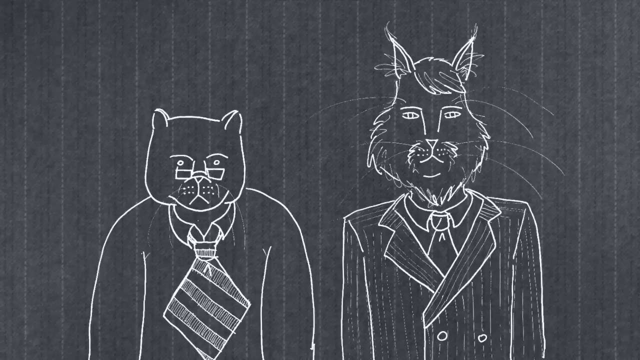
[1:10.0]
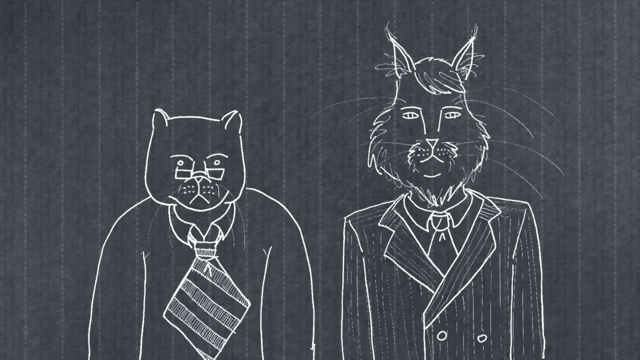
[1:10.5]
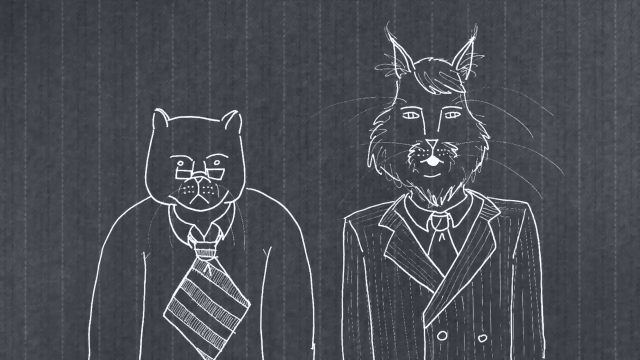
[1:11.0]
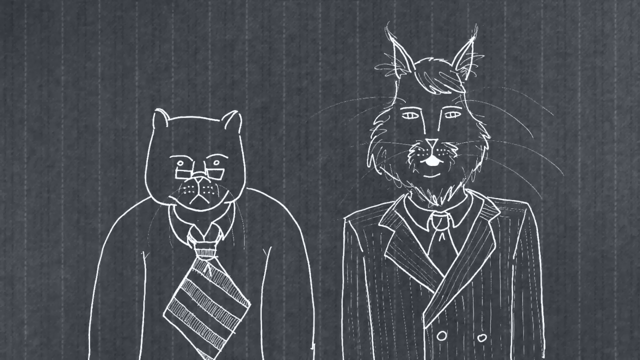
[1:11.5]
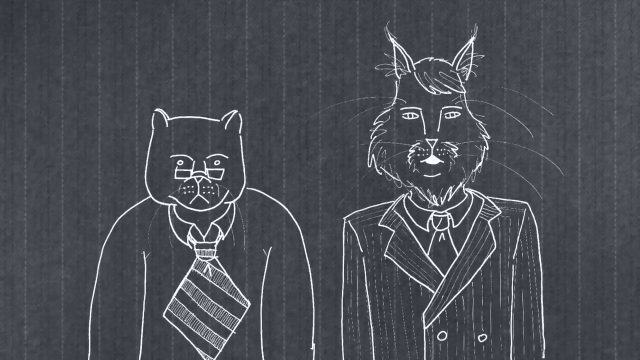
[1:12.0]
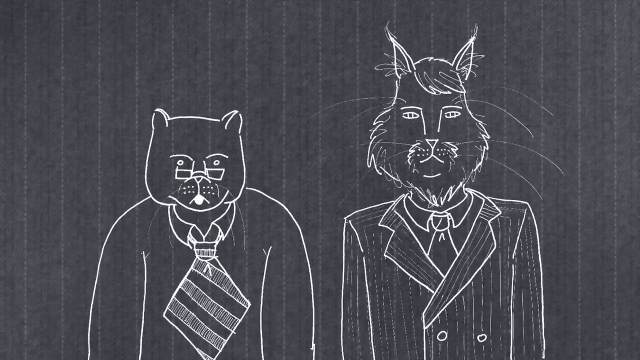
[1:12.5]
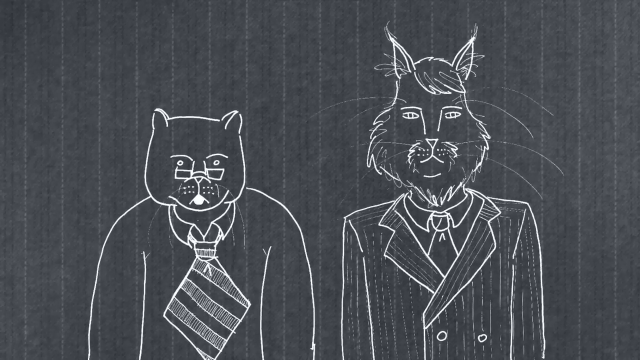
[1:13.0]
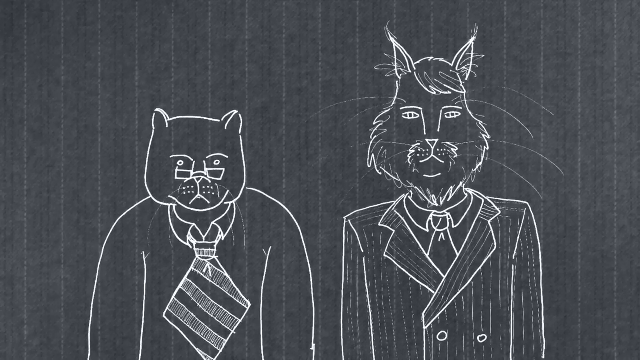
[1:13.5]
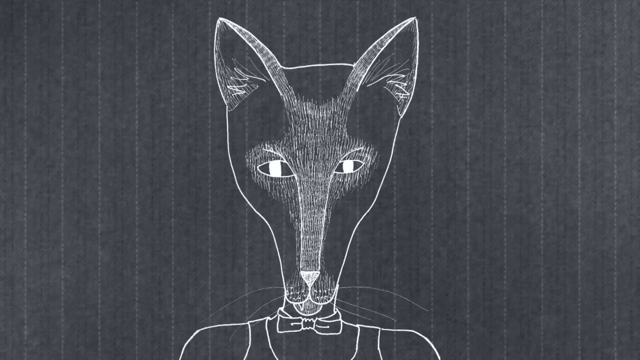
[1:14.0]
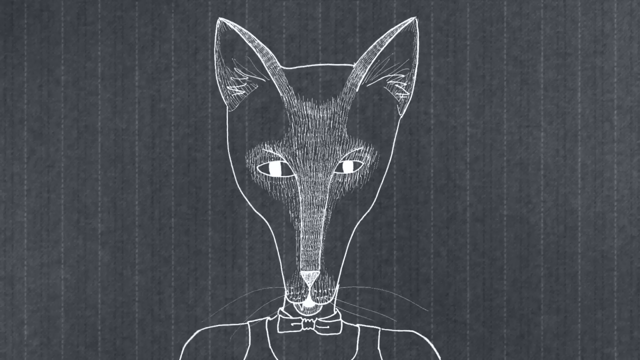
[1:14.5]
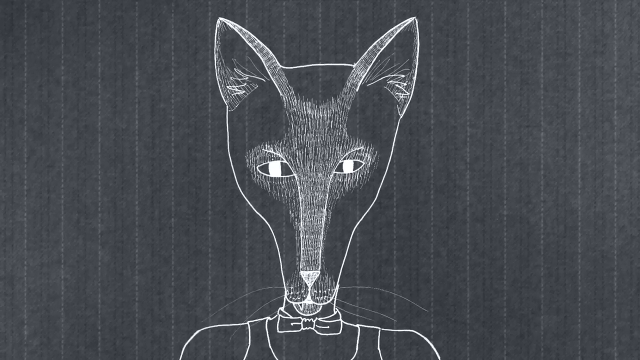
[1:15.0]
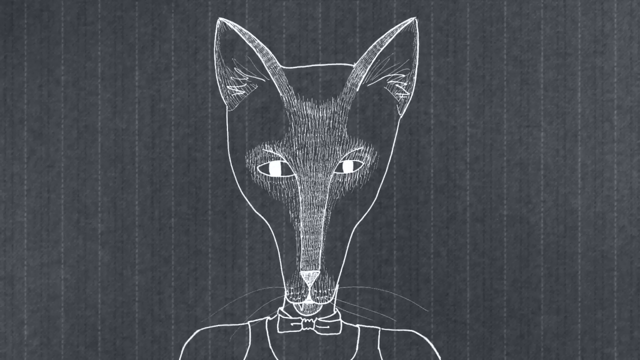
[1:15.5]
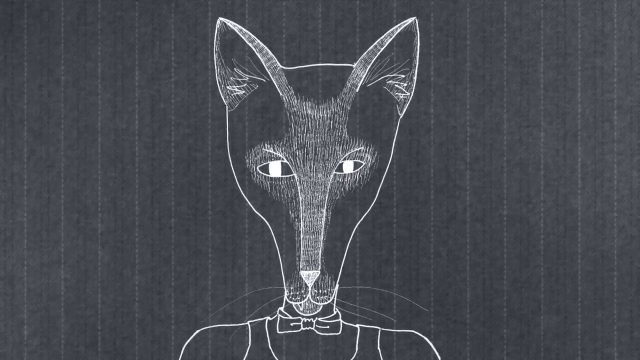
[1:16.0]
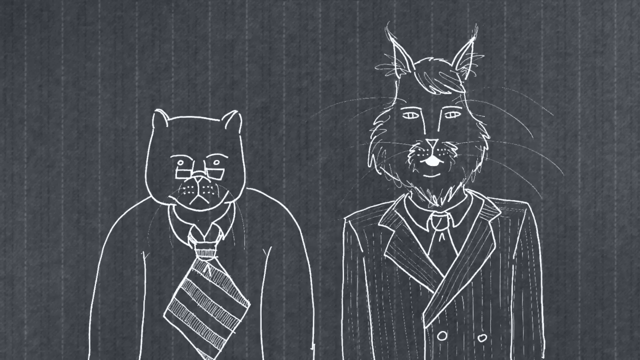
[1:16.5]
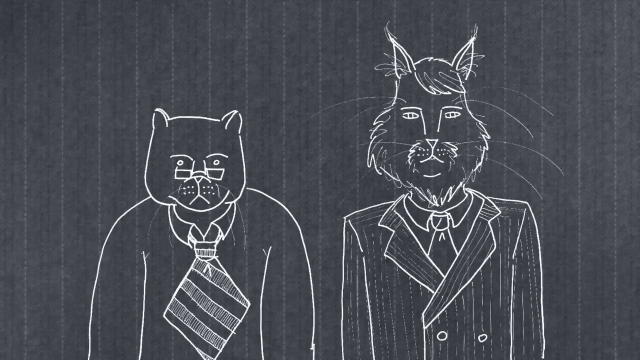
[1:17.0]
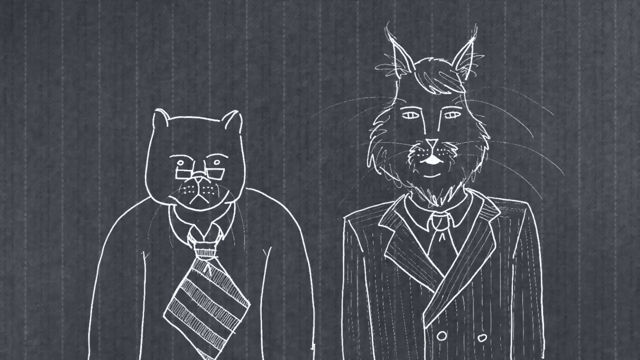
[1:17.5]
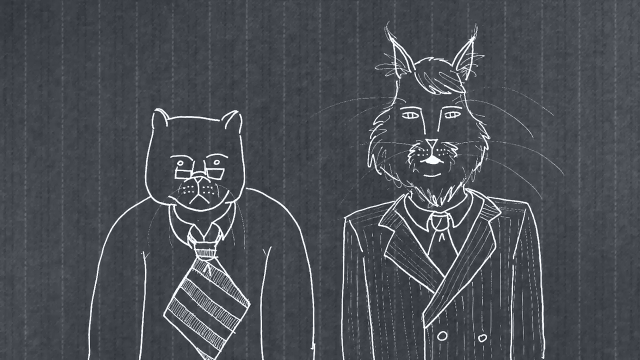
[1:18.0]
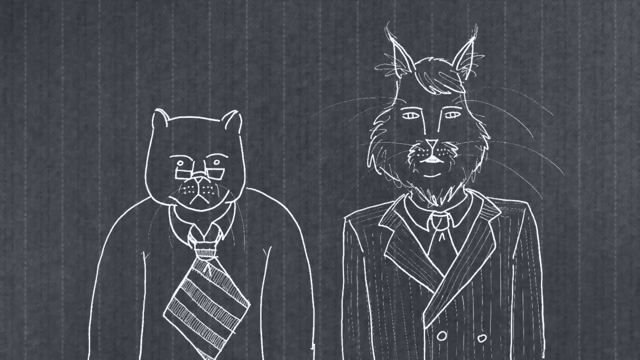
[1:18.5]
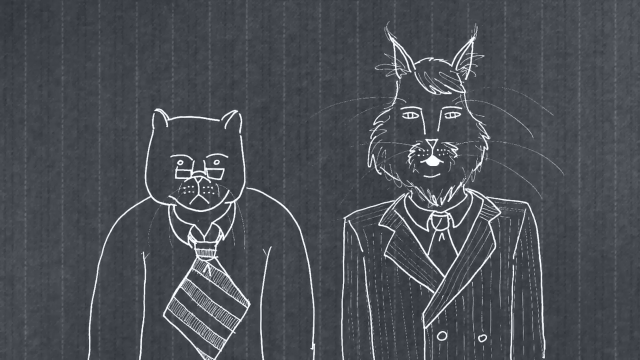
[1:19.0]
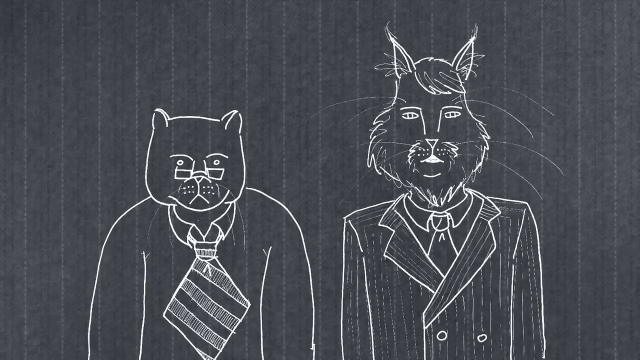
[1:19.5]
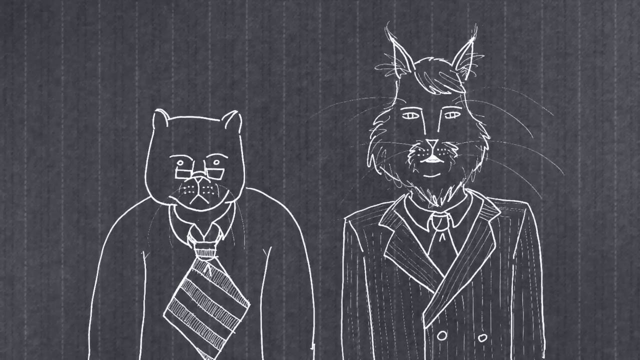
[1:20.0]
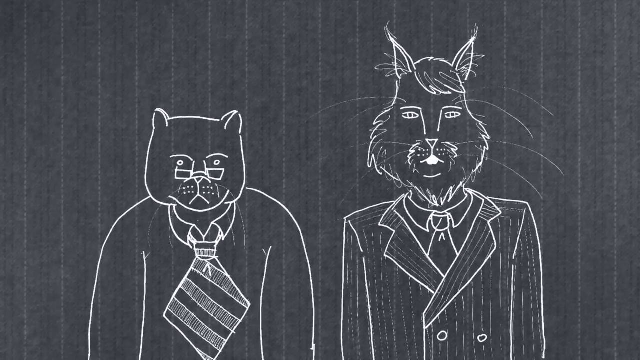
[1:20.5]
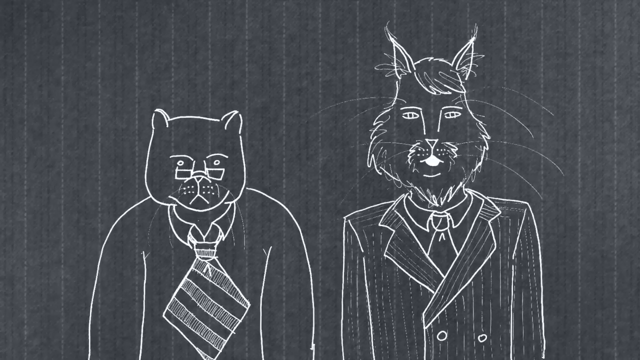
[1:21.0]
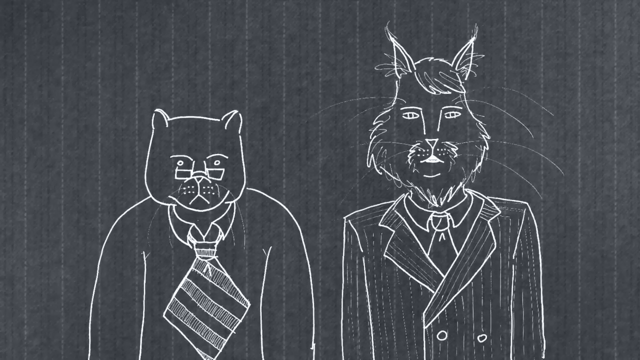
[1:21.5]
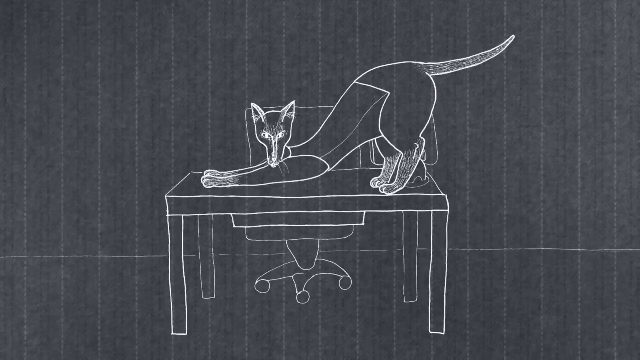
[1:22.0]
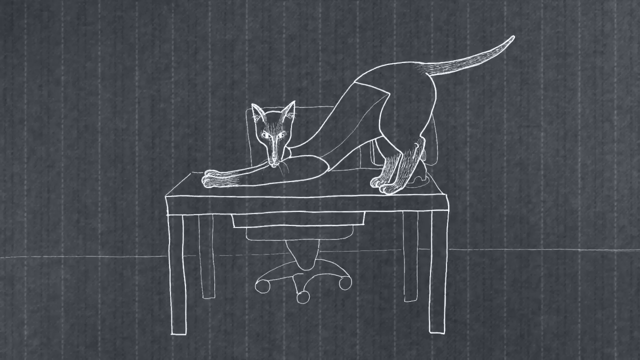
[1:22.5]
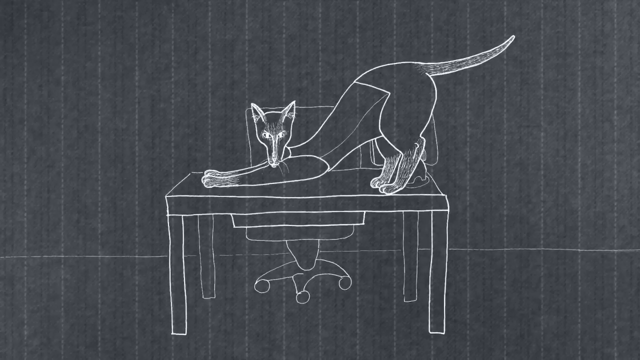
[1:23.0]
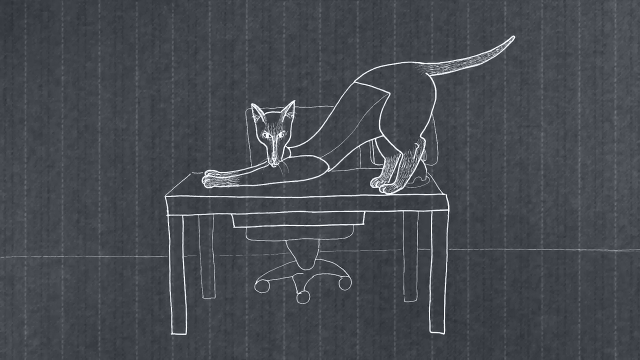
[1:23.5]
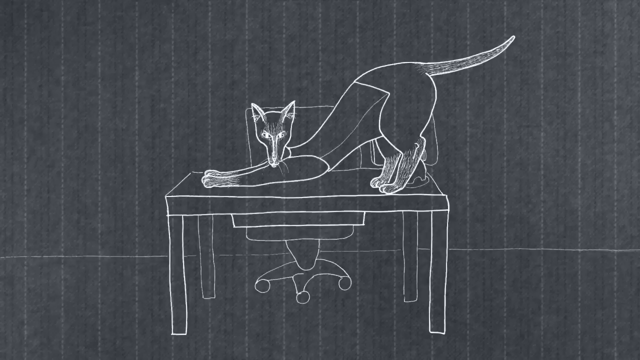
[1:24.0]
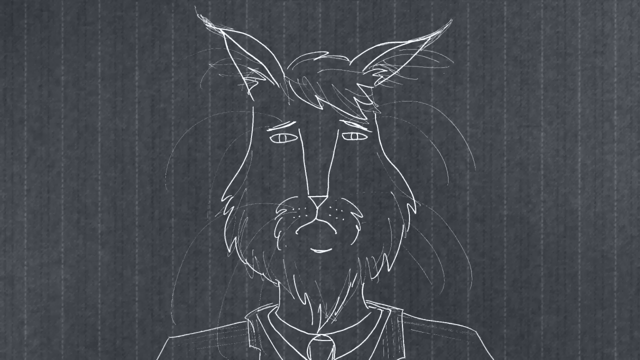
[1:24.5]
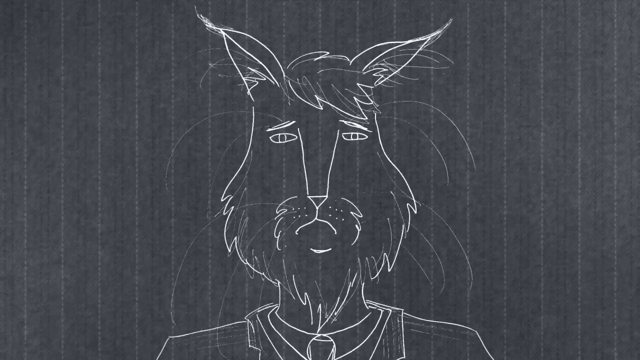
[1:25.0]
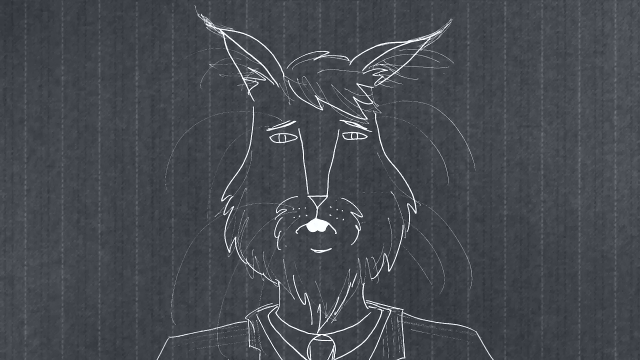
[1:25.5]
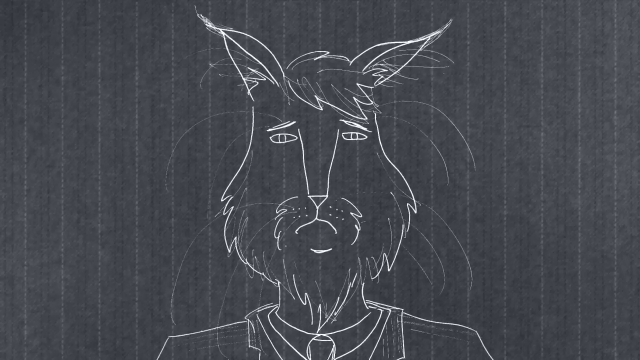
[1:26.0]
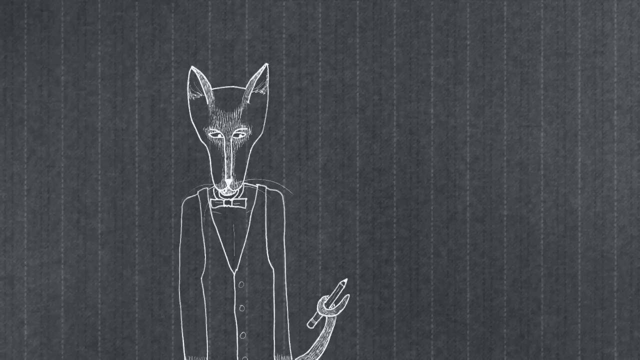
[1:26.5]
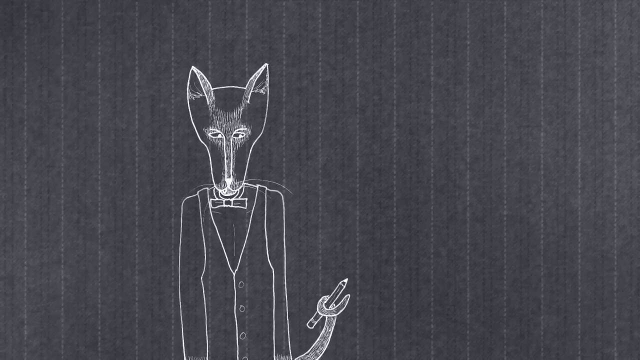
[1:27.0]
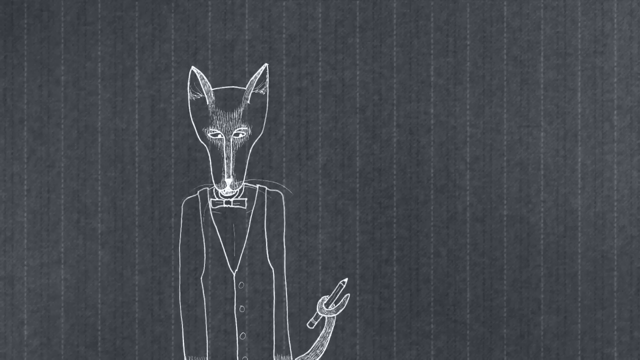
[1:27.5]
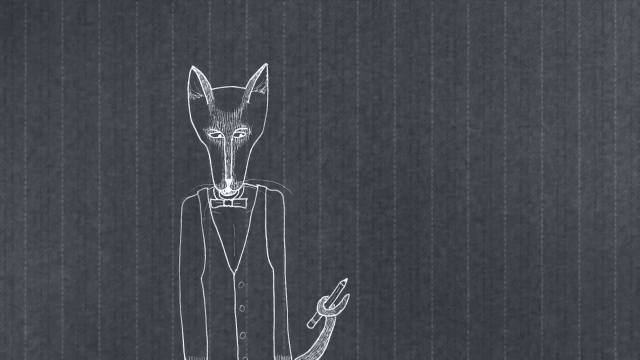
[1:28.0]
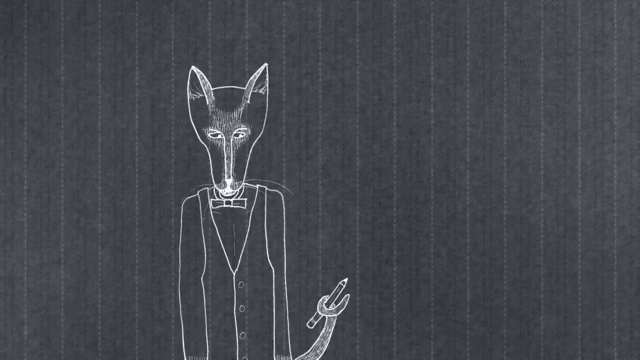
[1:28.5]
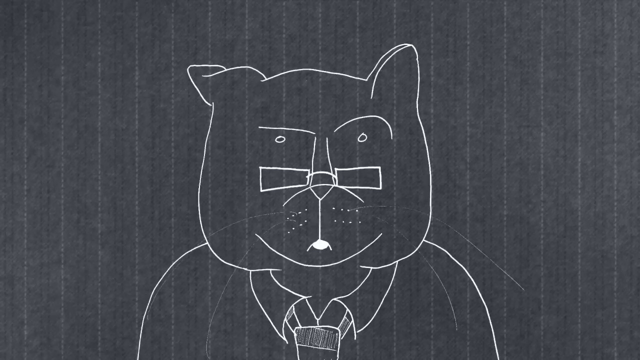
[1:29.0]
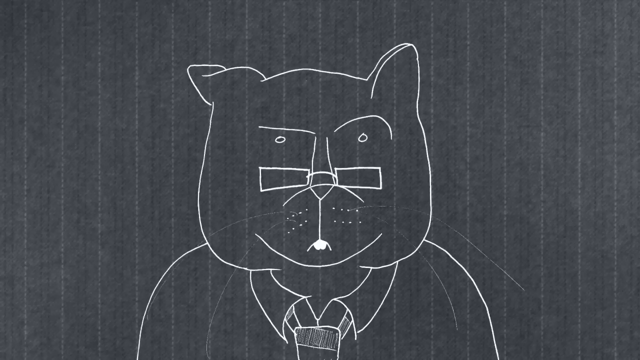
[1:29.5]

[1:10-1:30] The animation is drawn in white lines against a gray backdrop that is not flat but has a texture that almost looks like fabric. Three cats that look like humans, with anthropomorphic features and human clothes, appear in the scene. One wears a business suit with a tie, another wears a shirt with a very wide striped tie, and a third cat appears wearing a bow tie and a vest. Two of the cats stand next to each other; when they speak their mouths move, but no other part of their bodies moves. In one scene, the cat in the vest sits on top of a desk, stretching out its front legs and raising its bottom into the air. Close-ups follow of the other two cats speaking, and then the cat with the bow tie and vest stands with a pencil held in its tail.